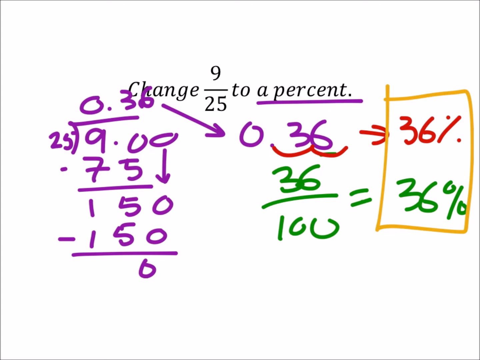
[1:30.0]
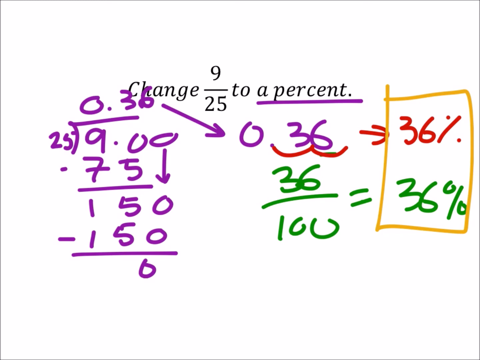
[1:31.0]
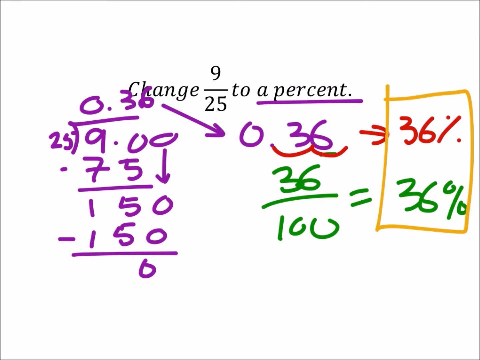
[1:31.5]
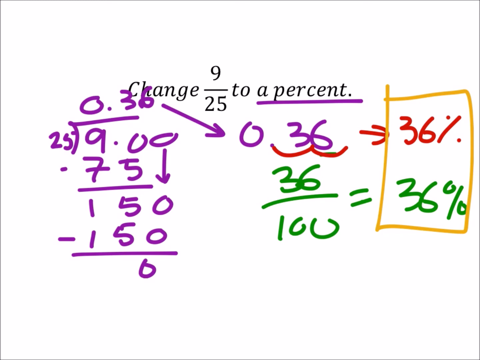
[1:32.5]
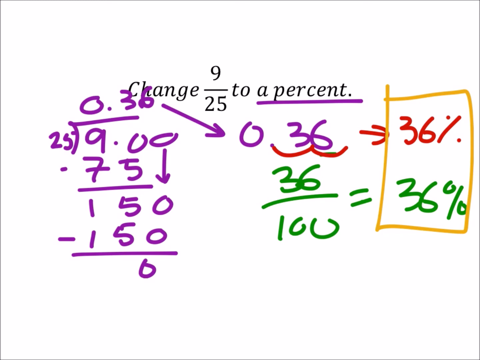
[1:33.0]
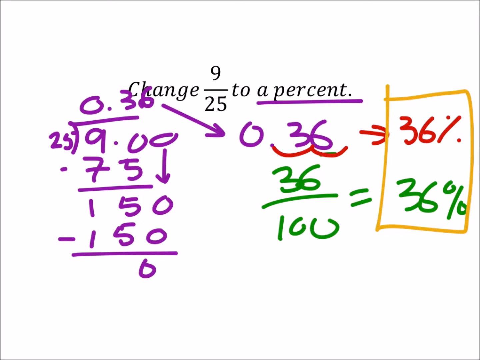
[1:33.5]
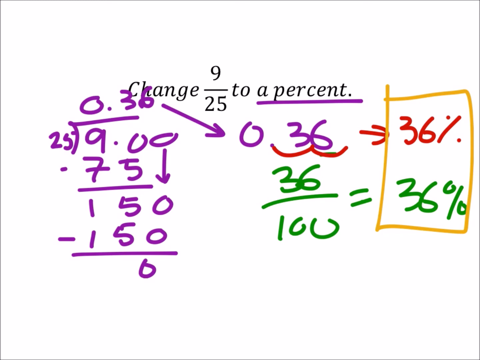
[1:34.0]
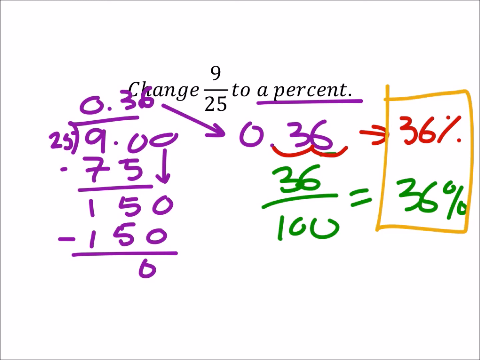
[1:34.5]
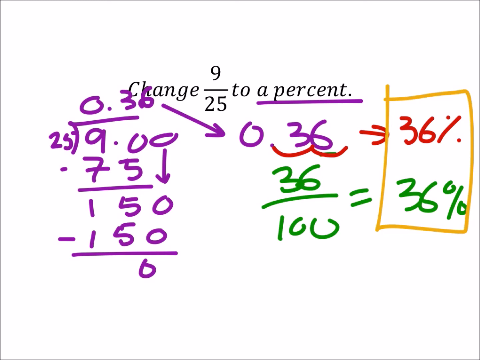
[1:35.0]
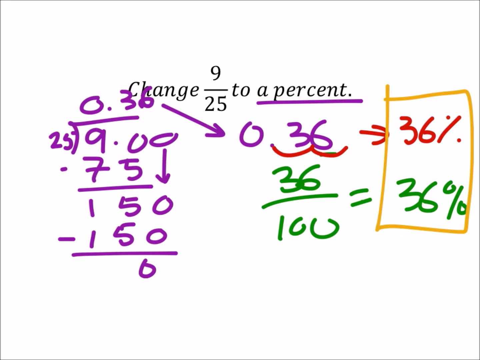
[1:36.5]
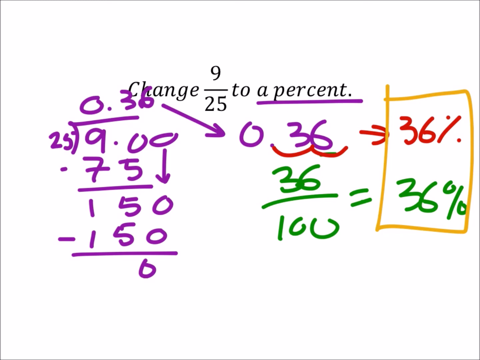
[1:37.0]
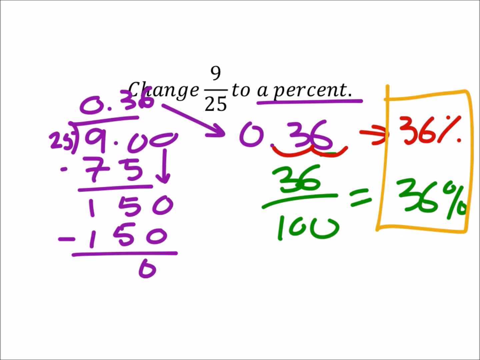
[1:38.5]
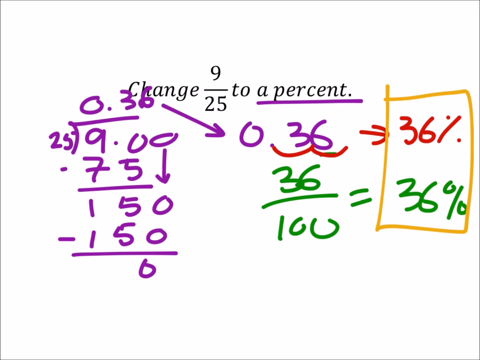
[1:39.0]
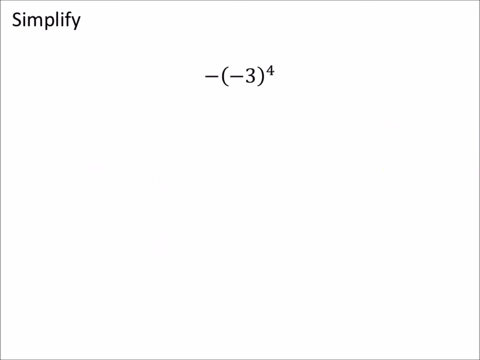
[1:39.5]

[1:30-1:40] The screen remains static with no further movement. On the white background, text in the middle at the top reads "Change 9 over 25 to a percent", with "a percent" underlined by a purple handwritten line. On the left beneath it is 25 long division 9.00 with 0.36 above. Beneath the 9.00 are minus 75 and a downward-pointing arrow, then a horizontal line, 150, minus 150, another horizontal line, and a 0 lined up with the zeros of the 150s above it. Toward the middle top, a purple arrow points diagonally down and to the right from the end of the 0.36 and ends in the text 0.36. Its 6 is underlined in green, and a red moustache shape underlines the 0.36. To the right are a rightward arrow and a red 36%. Beneath the 0.36 is green text reading 36 over 100 equals 36%. The two 36% figures are enclosed in a hand-drawn yellow frame.